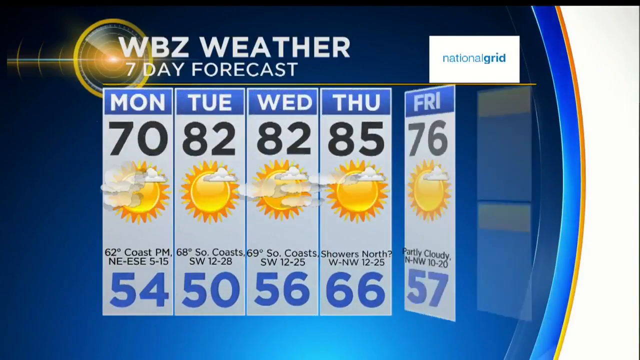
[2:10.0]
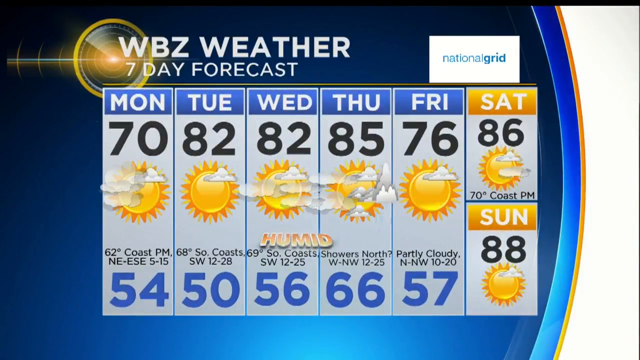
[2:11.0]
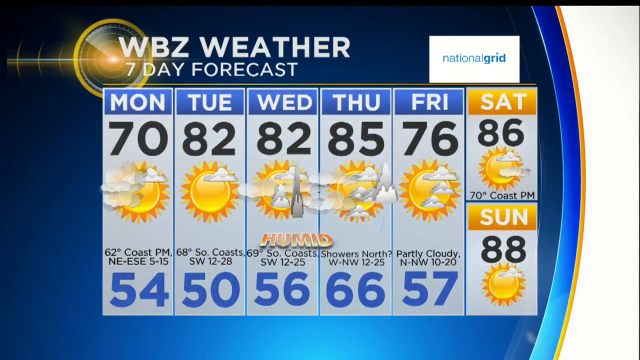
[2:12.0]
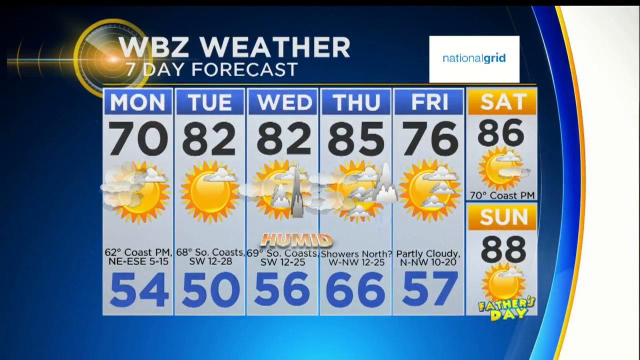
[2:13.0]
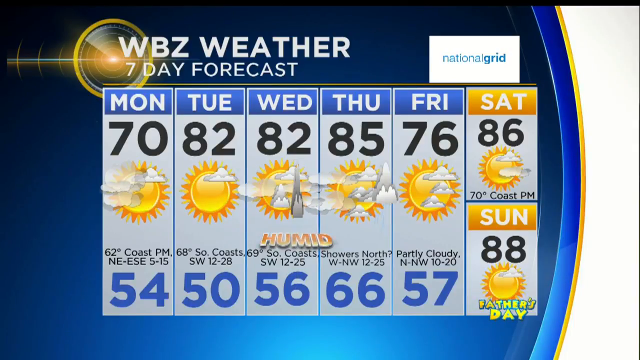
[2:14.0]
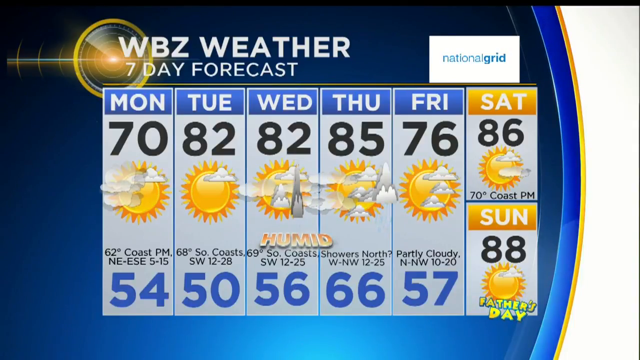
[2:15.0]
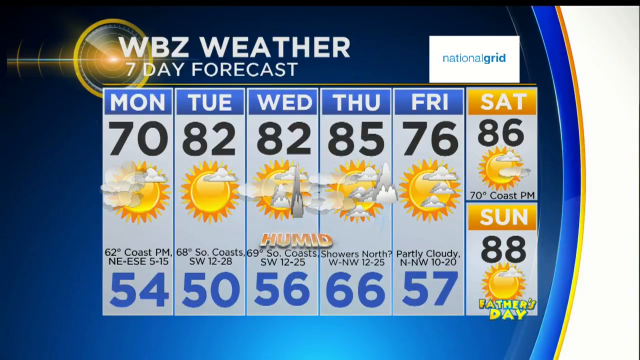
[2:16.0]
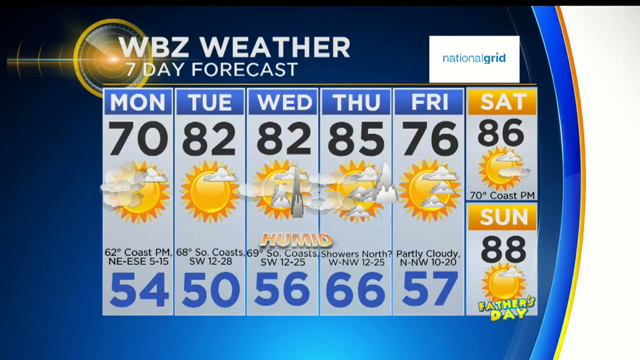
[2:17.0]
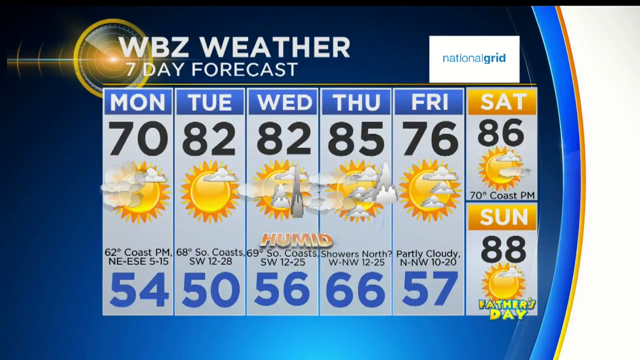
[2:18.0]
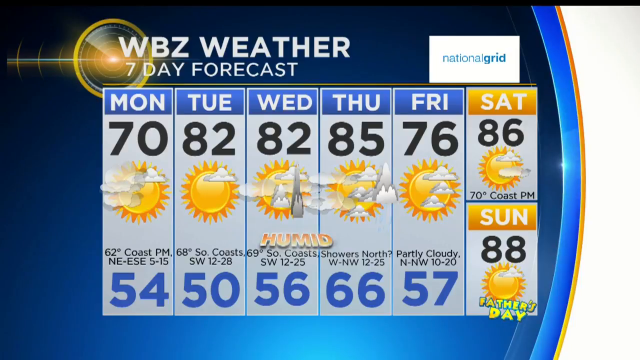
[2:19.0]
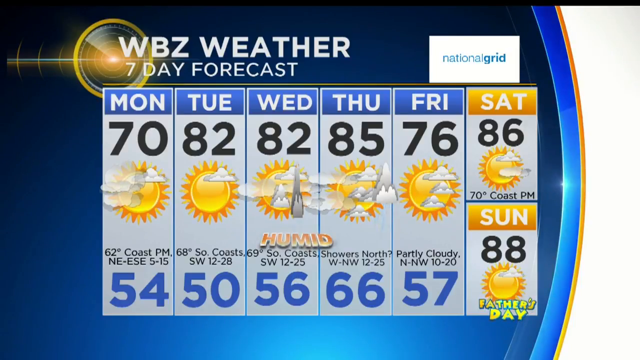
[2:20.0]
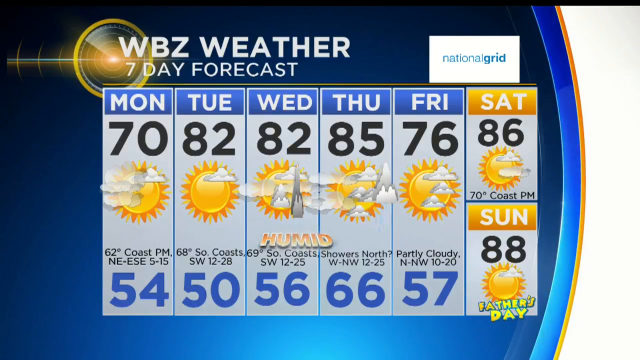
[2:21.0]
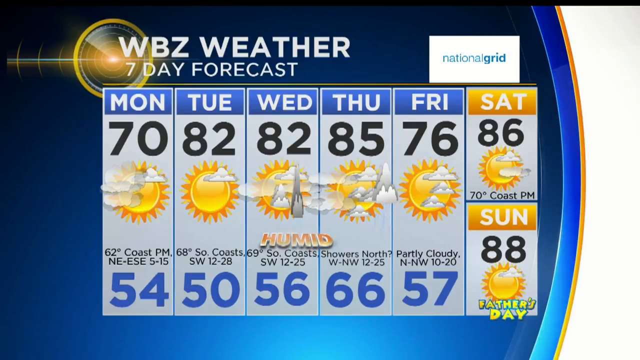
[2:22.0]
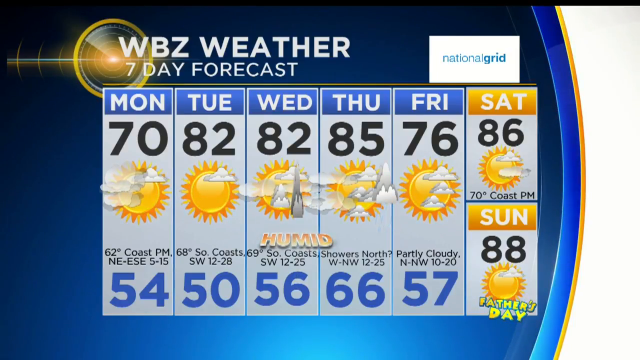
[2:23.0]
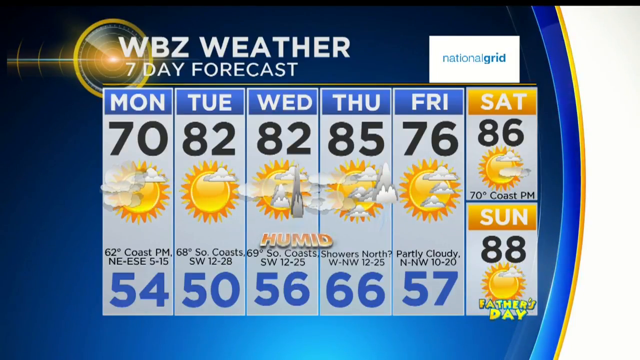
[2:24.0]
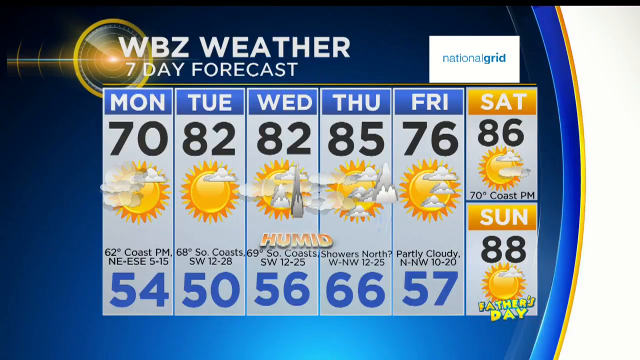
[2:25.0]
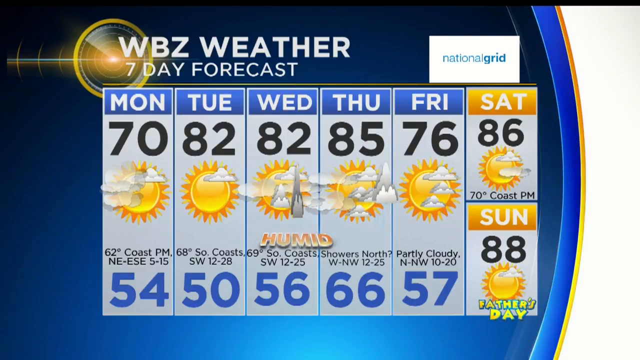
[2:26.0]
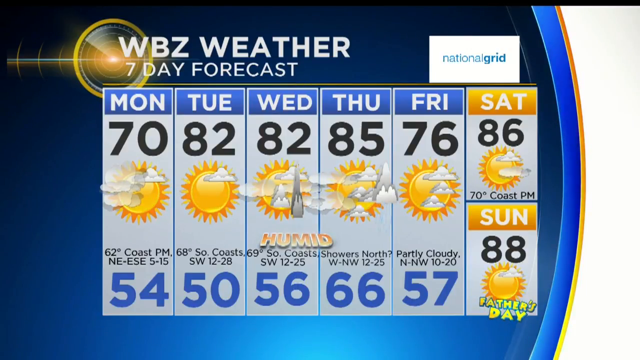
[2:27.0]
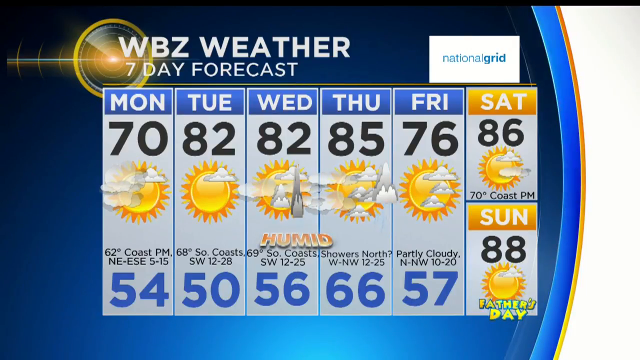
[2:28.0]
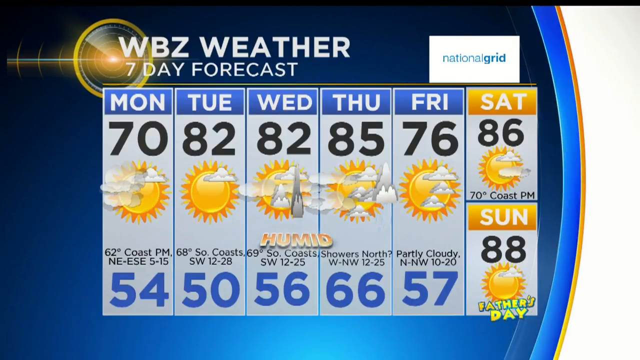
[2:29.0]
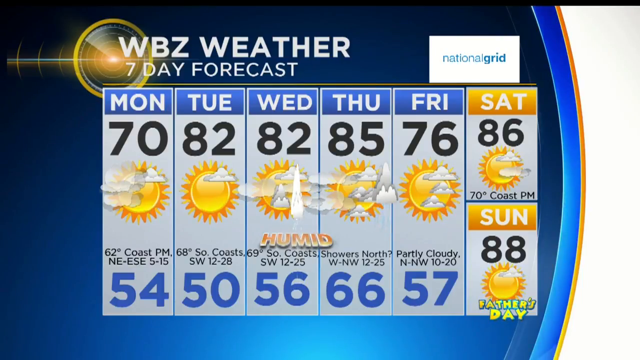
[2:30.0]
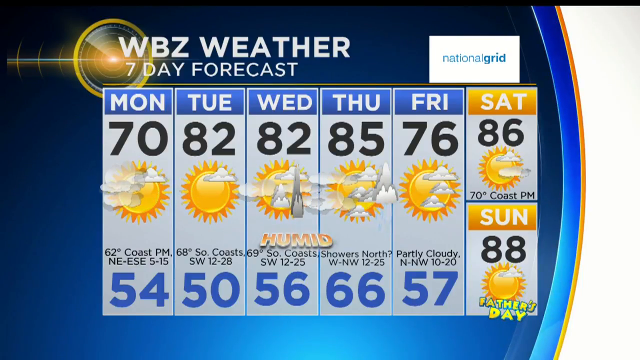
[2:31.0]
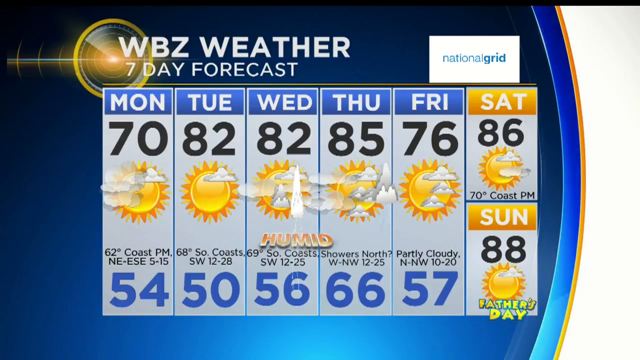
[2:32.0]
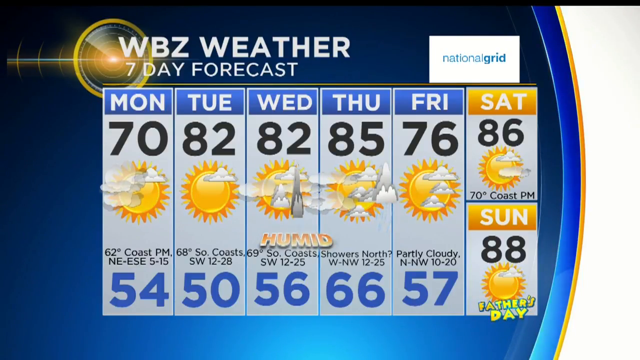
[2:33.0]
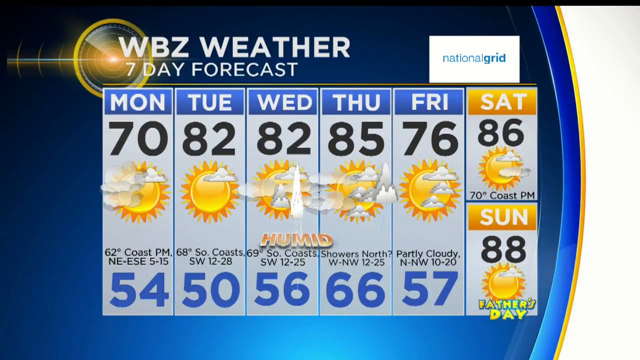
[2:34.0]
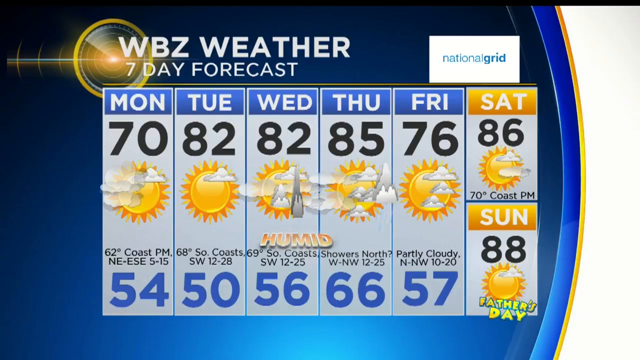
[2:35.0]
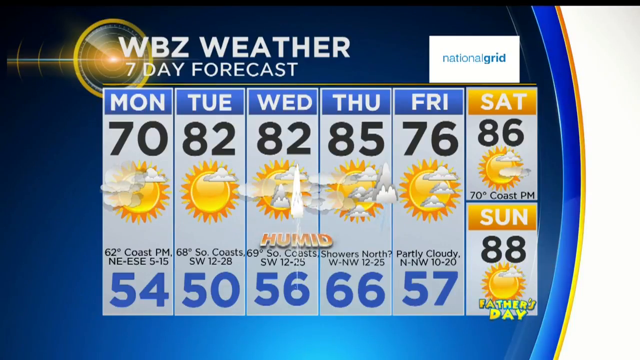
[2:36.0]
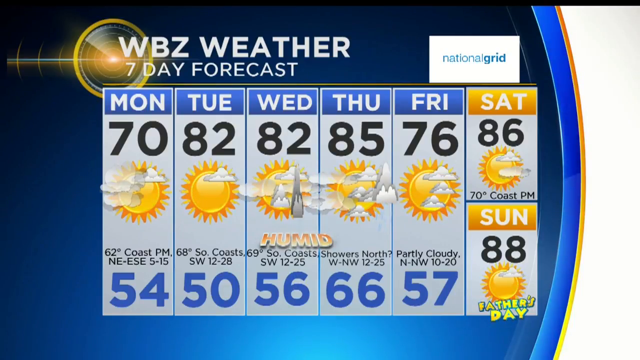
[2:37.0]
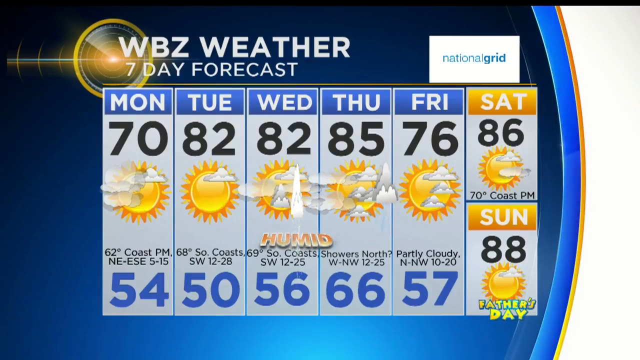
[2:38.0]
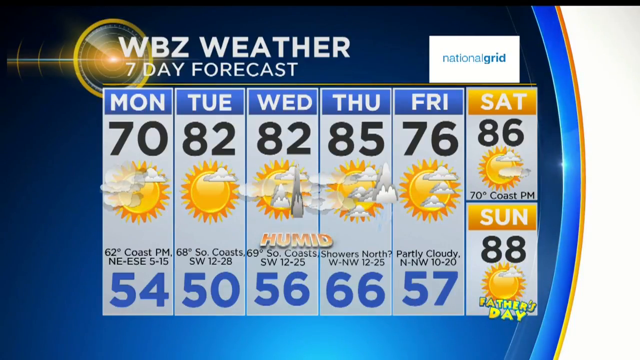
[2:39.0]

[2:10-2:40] The WBZ weather seven-day forecast screen continues. To the right it reads "national grid", and to the left is a dark blue background with a yellow disc. At the bottom are the temperatures for each day, Monday through Sunday, each with a high and a low temperature. Most days have a sun and some clouds; Wednesday shows rain and humid conditions, with the icon sort of bouncing back and forth like it is raining. Each day seems to flip open as it is shown until all of them are showing. At the very right there is sort of a blue stripe going down, with a small thin orange pinstripe next to it, and a white one.